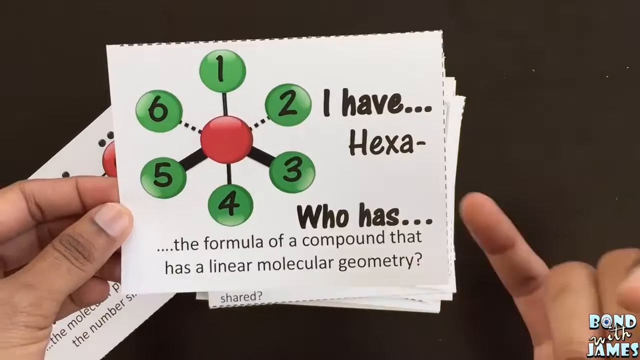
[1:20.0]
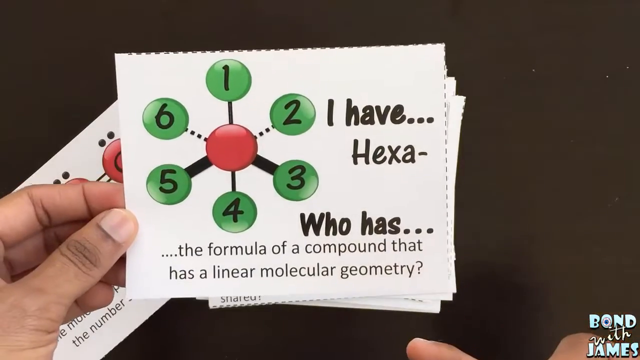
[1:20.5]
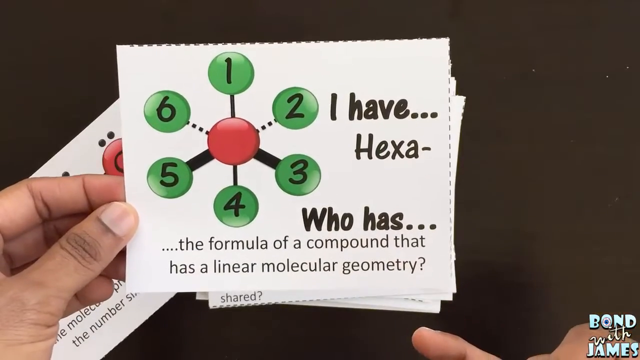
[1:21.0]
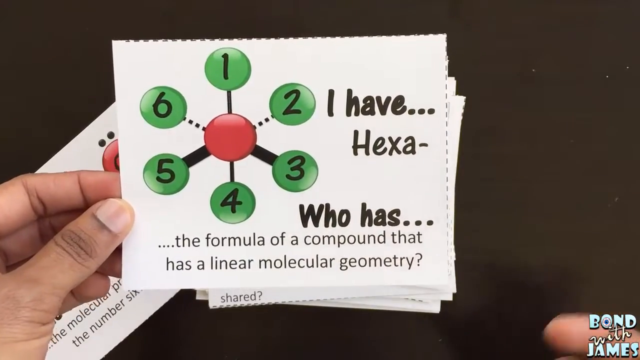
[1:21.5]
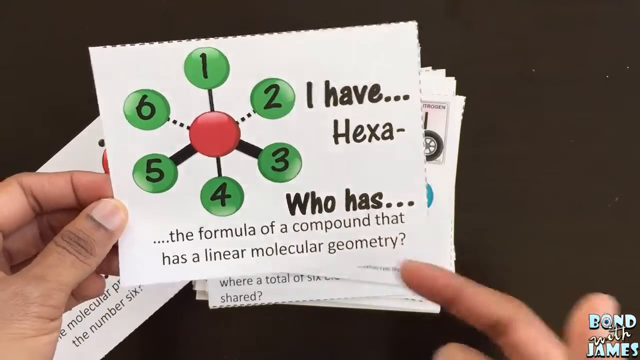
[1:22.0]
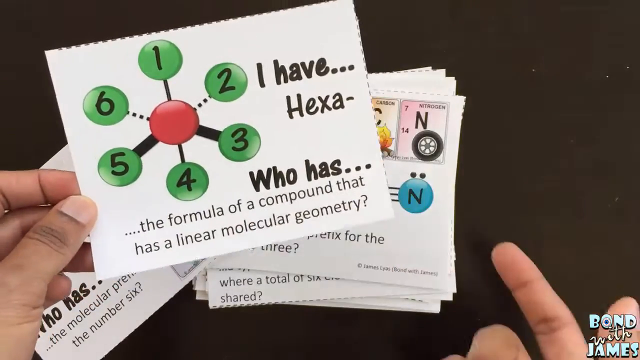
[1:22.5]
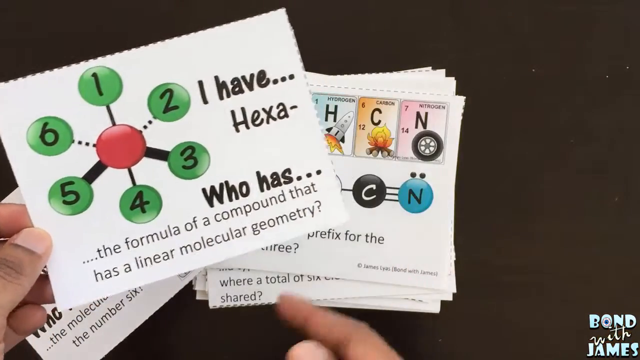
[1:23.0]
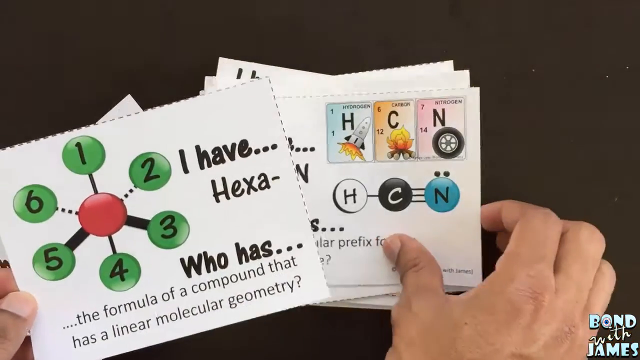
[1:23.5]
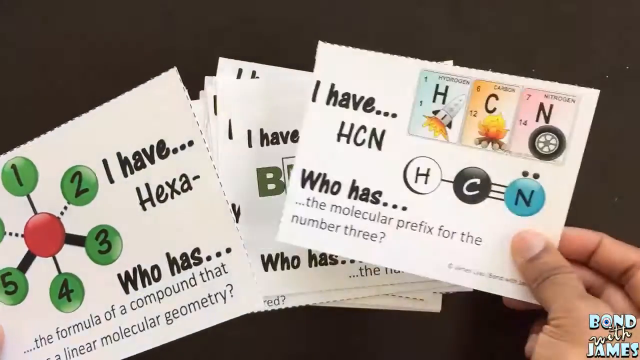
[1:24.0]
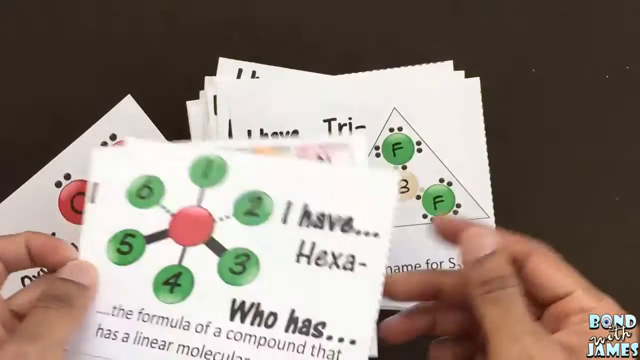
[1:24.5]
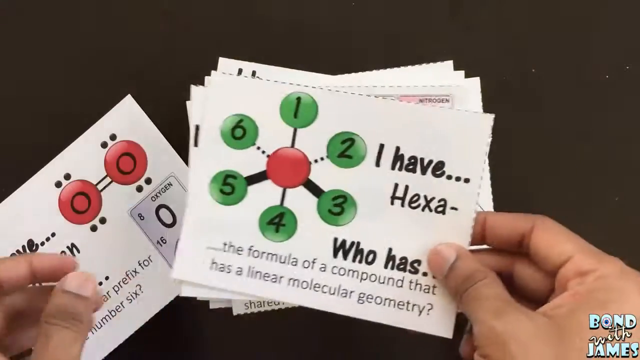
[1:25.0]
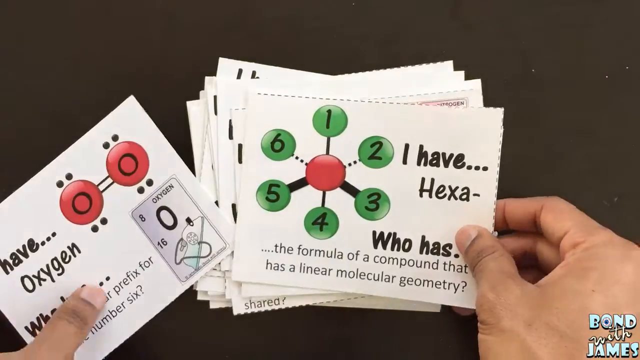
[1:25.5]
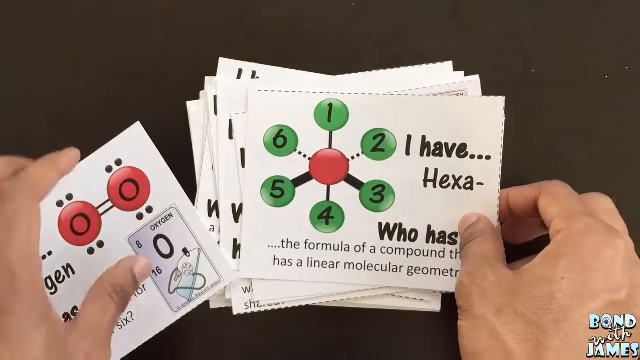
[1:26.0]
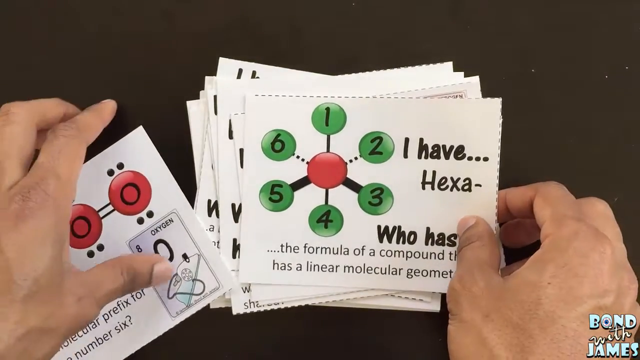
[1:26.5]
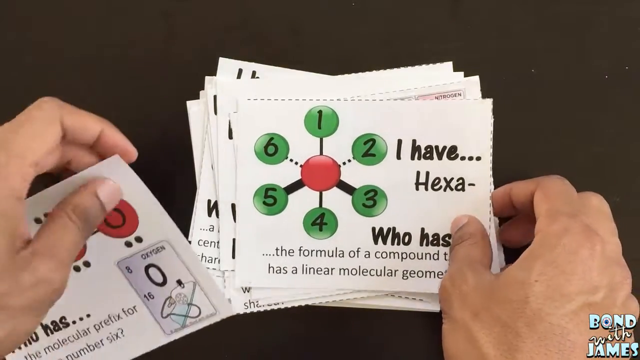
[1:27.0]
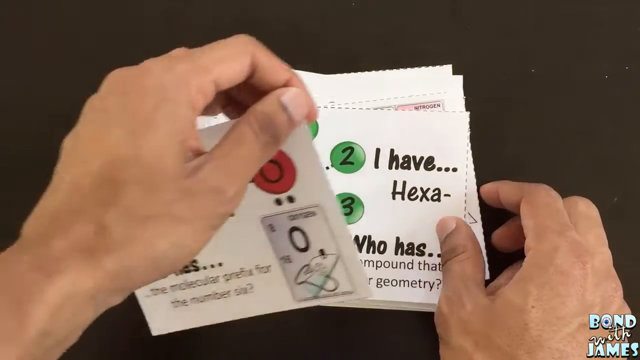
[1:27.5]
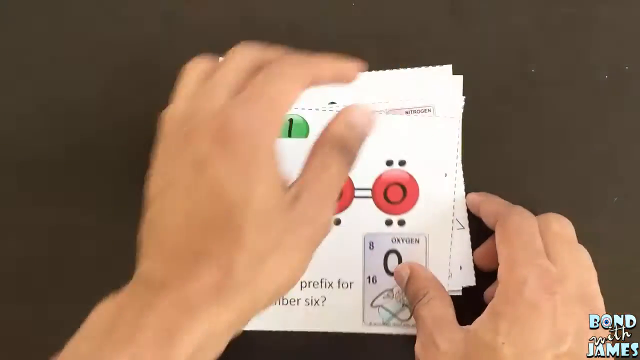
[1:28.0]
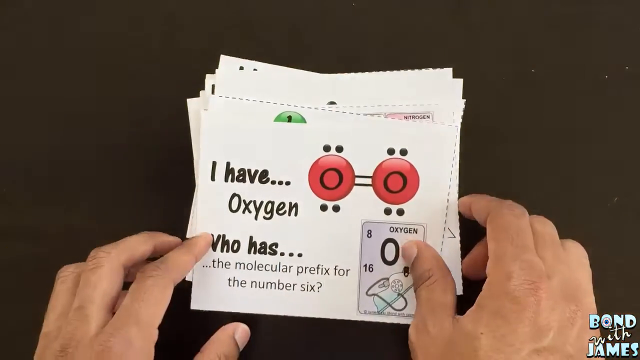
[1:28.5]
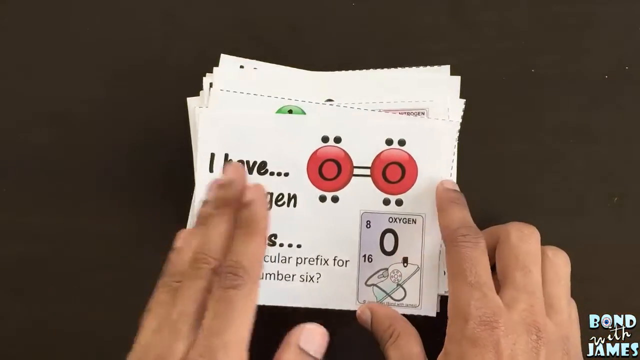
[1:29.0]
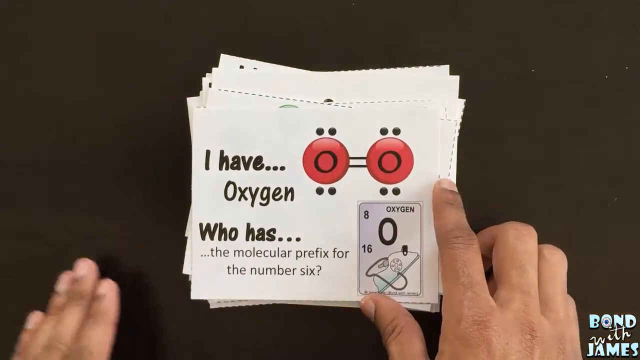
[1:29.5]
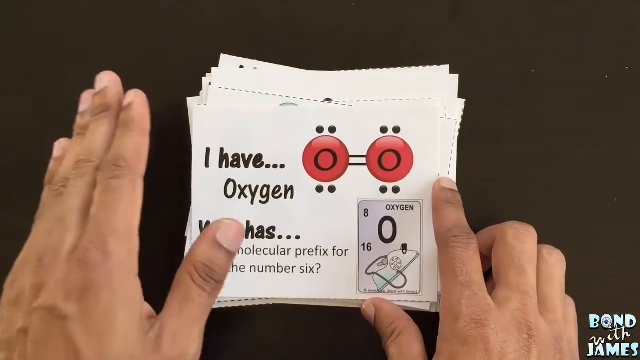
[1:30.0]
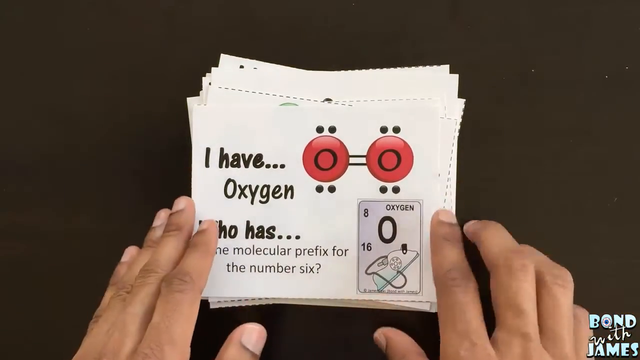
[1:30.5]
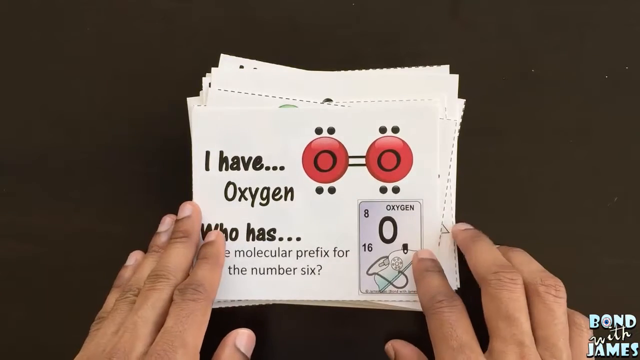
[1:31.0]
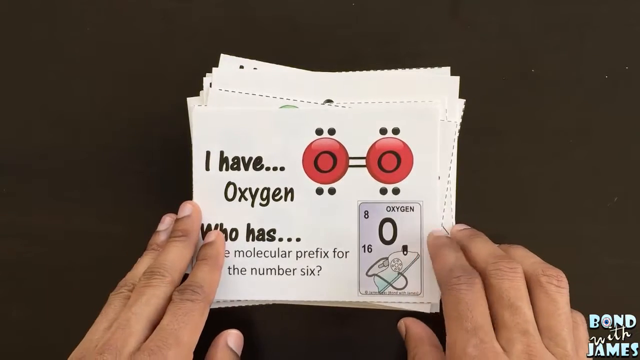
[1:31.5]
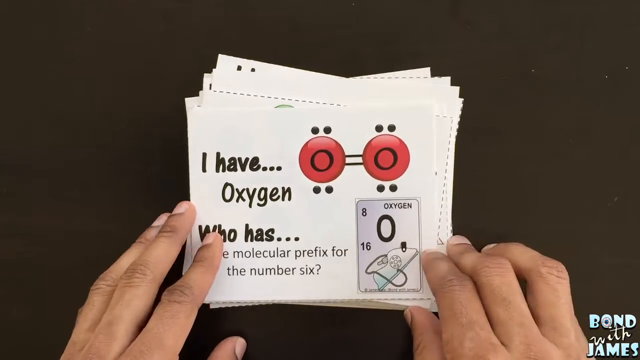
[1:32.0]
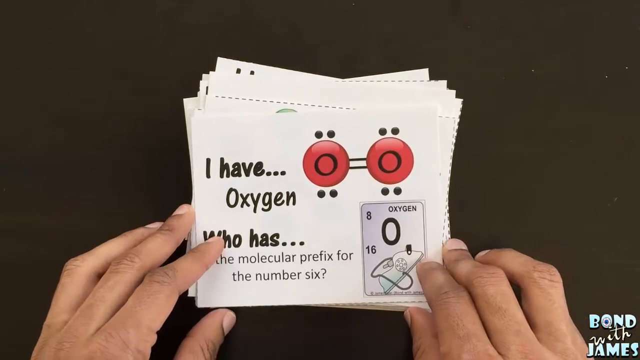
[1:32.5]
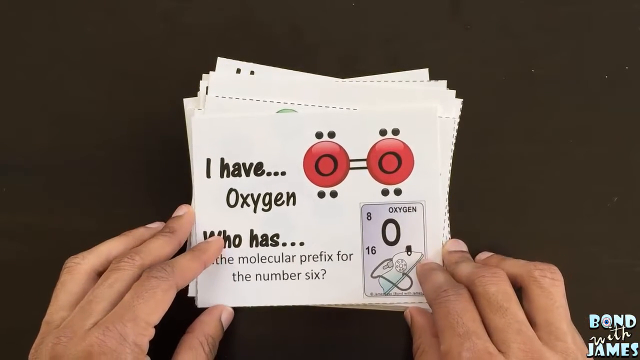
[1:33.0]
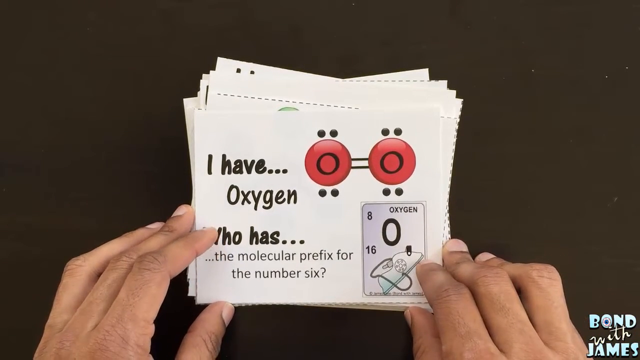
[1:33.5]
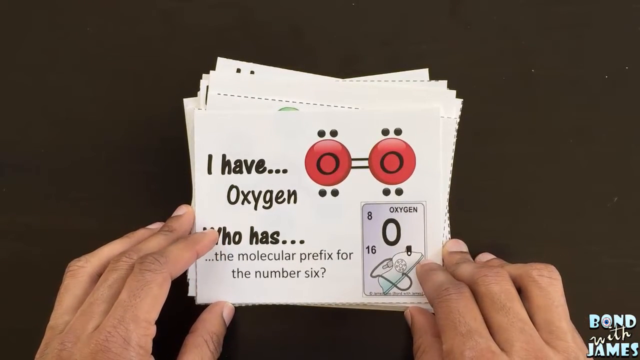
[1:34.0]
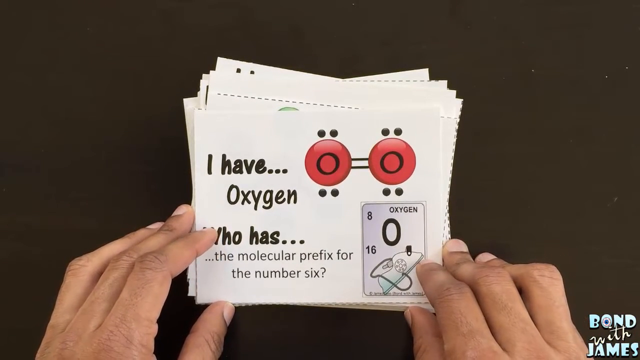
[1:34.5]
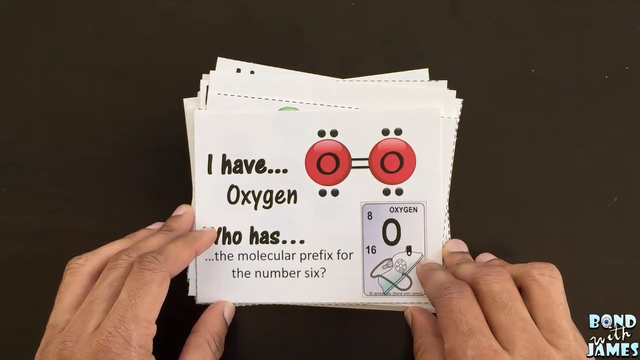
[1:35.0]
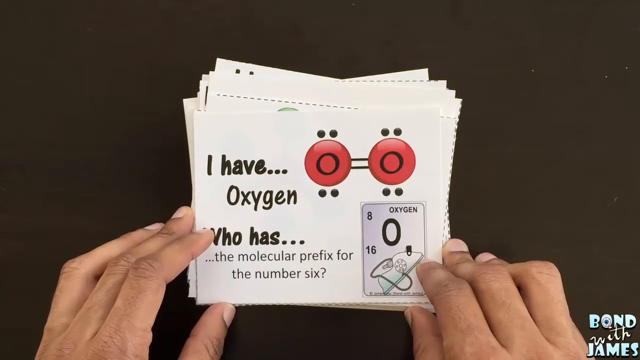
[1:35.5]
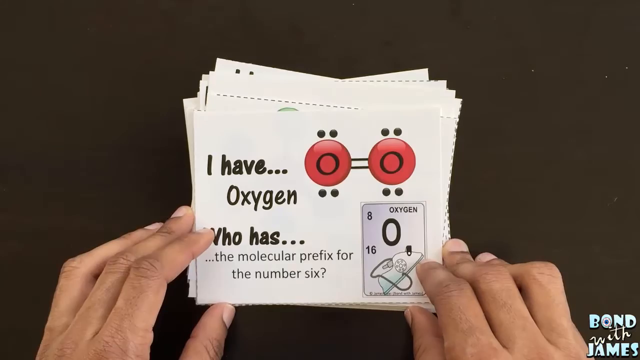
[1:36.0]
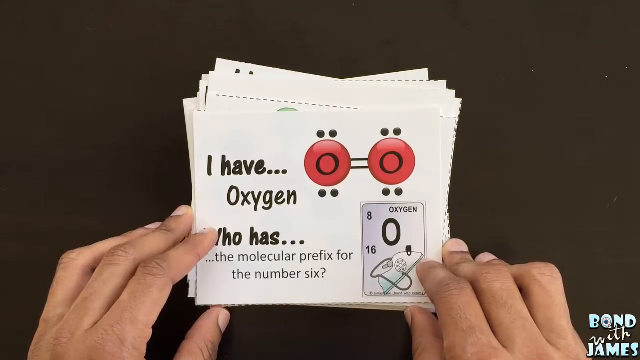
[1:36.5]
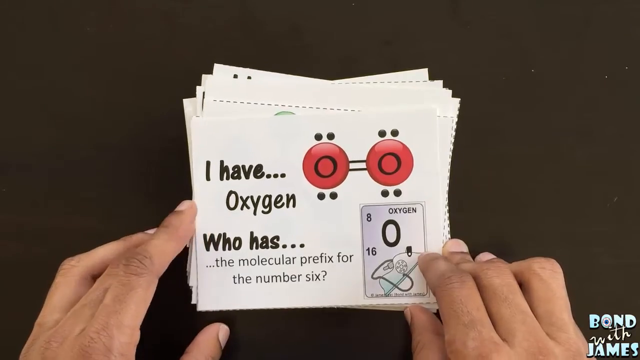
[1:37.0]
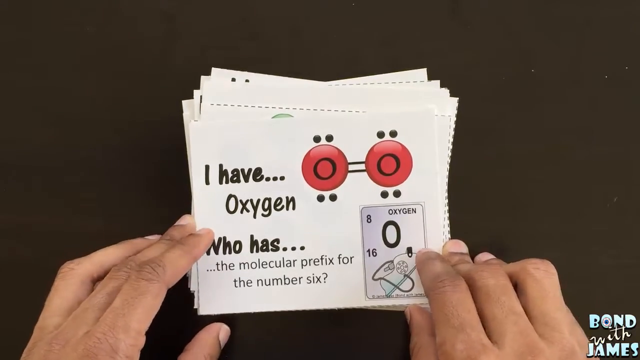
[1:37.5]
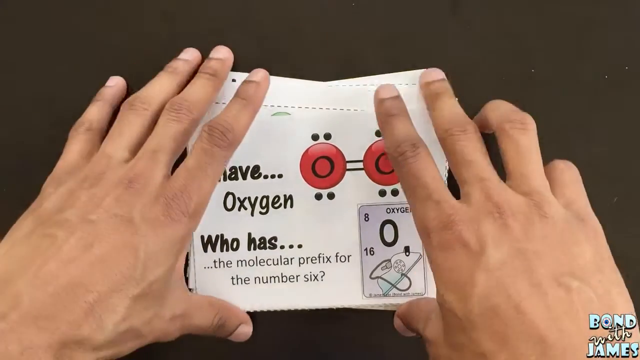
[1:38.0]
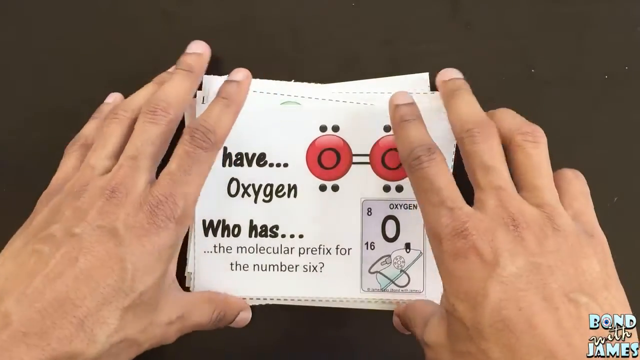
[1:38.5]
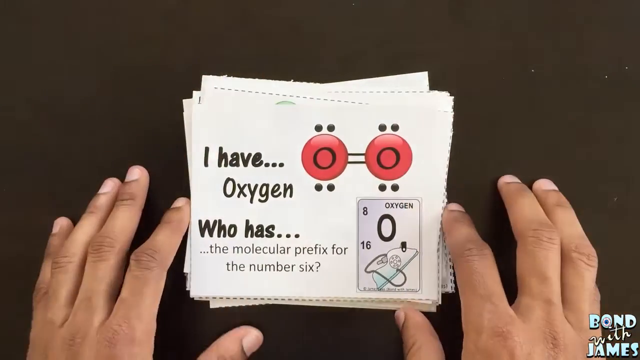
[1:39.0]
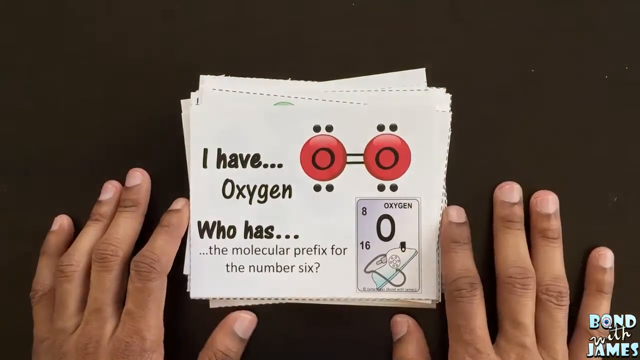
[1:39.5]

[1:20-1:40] The left hand holds the "I have hexa" card, which has green circles numbered 1 to 6, the text "who has the formula of a compound that has a linear molecular geometry," and "I have hexa" written boldly. The person drops it back and picks up the first card, "I have oxygen," which has two red molecular symbols and the text "who has the molecular prefix for the number six," with another box inside where oxygen appears as an O in the middle flanked by 8 and 16. The person makes gestures with their hand, probably talking about the card. They rearrange the cards and pick up the second card again, "I have hexa," with "who has the formula of the compound that has the linear molecular geometry" written on it, followed by a question mark.